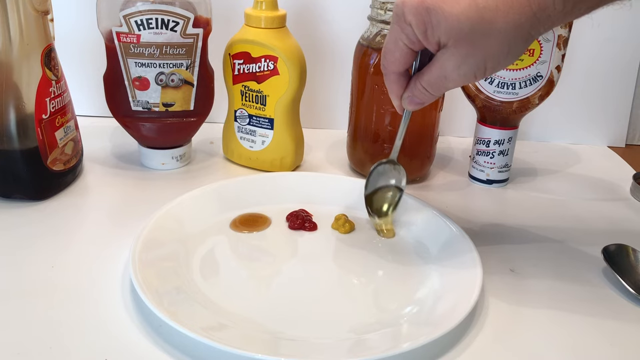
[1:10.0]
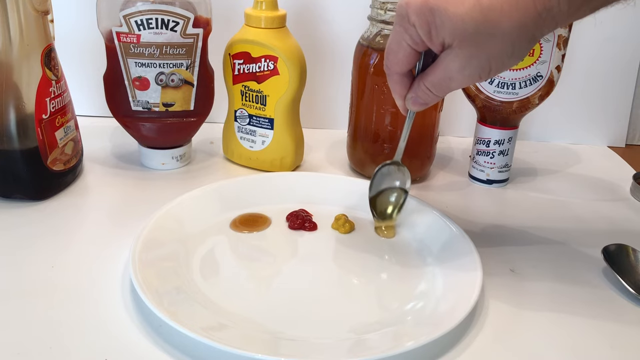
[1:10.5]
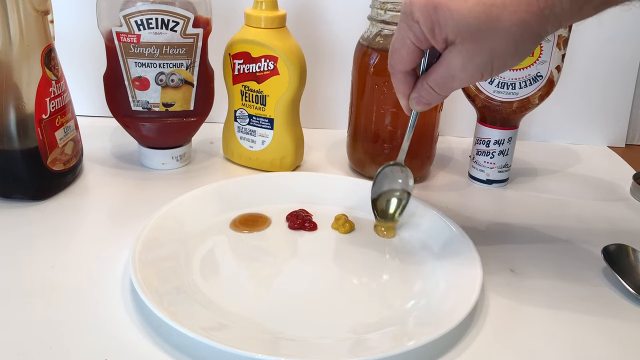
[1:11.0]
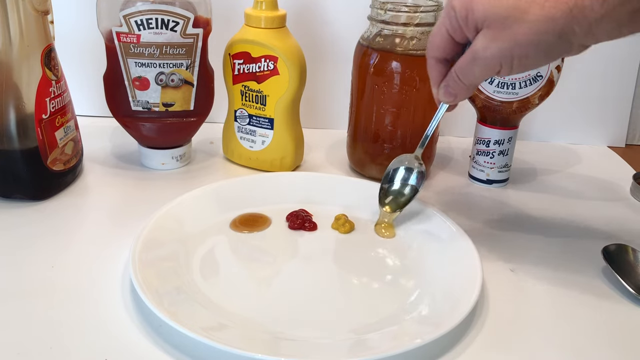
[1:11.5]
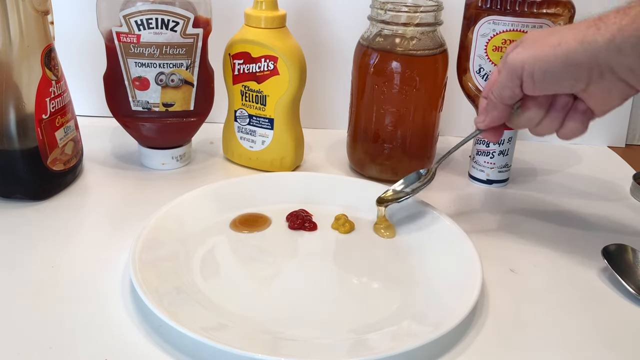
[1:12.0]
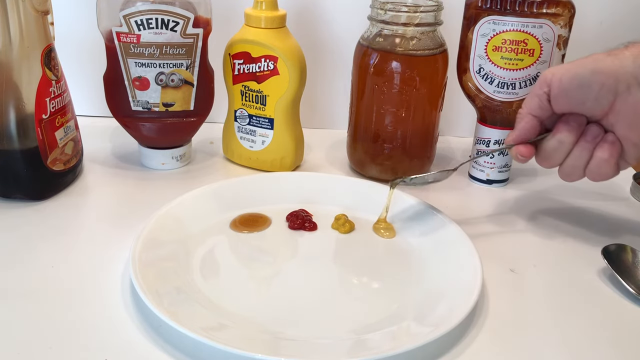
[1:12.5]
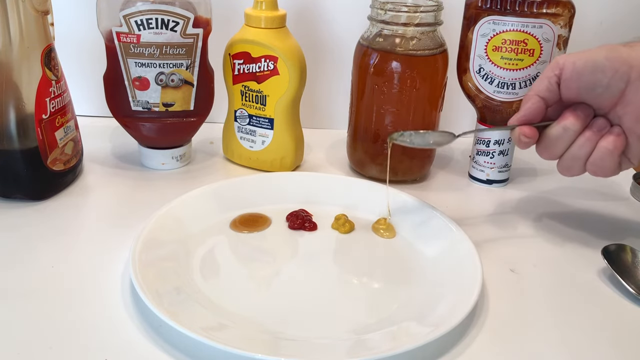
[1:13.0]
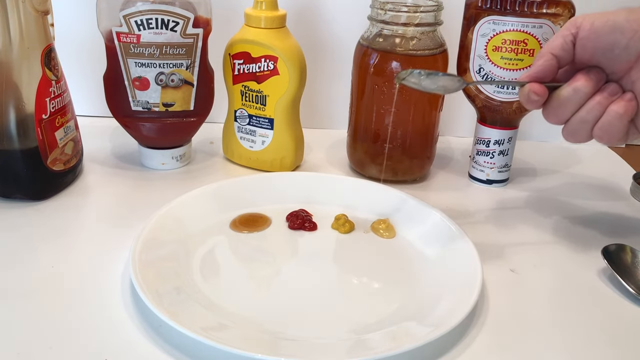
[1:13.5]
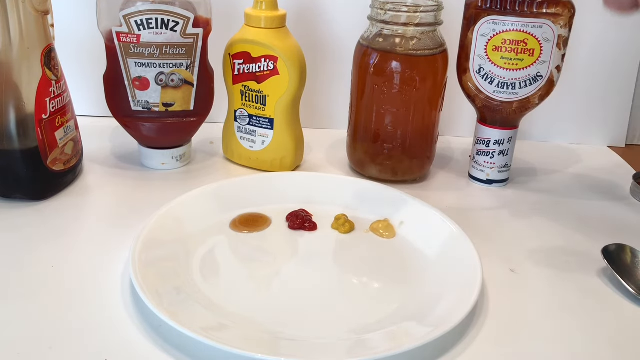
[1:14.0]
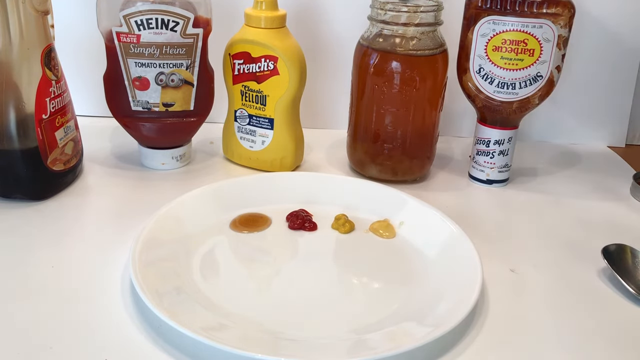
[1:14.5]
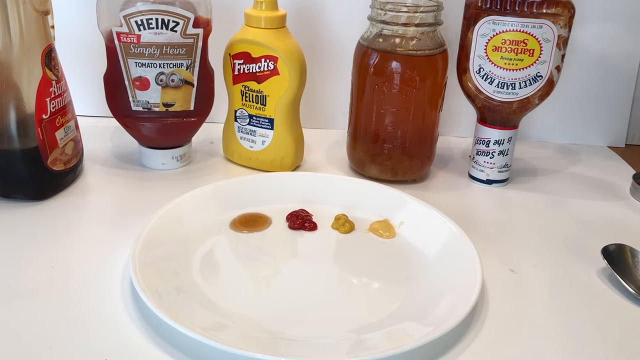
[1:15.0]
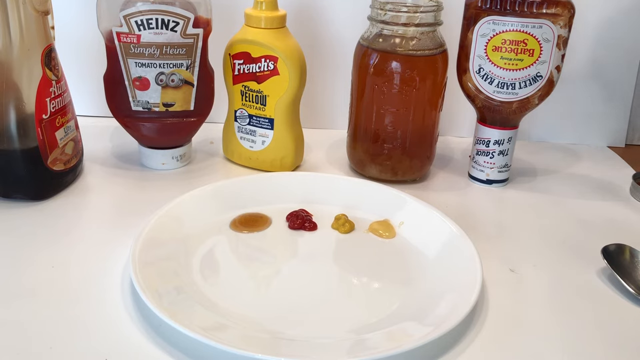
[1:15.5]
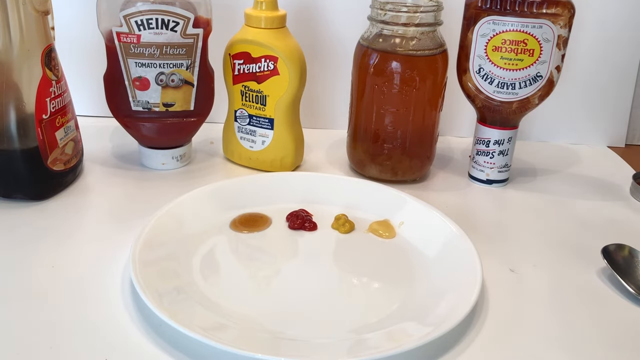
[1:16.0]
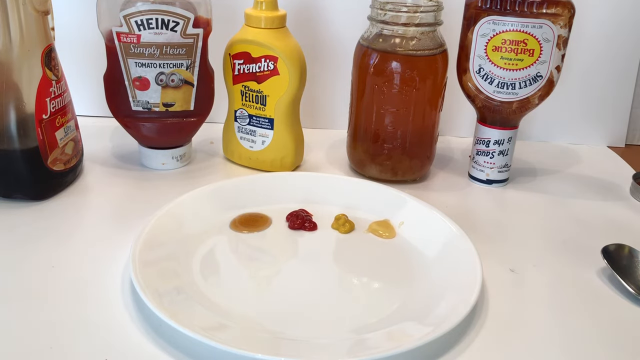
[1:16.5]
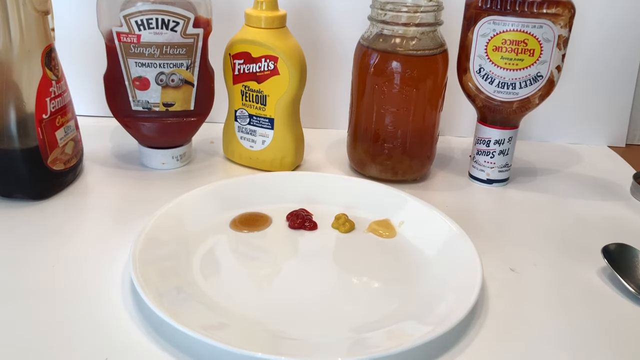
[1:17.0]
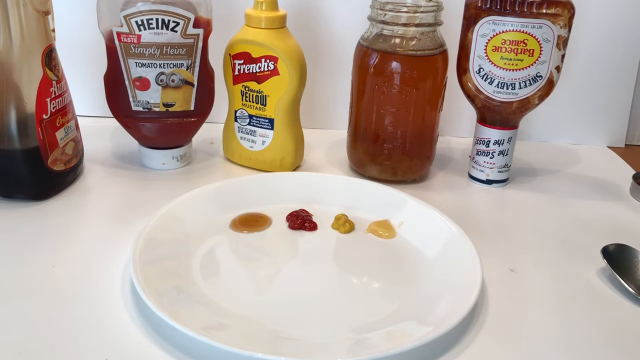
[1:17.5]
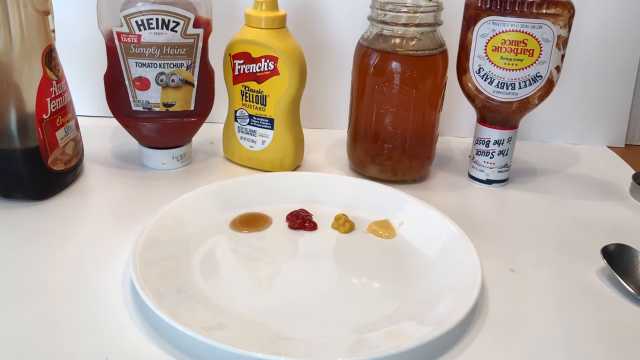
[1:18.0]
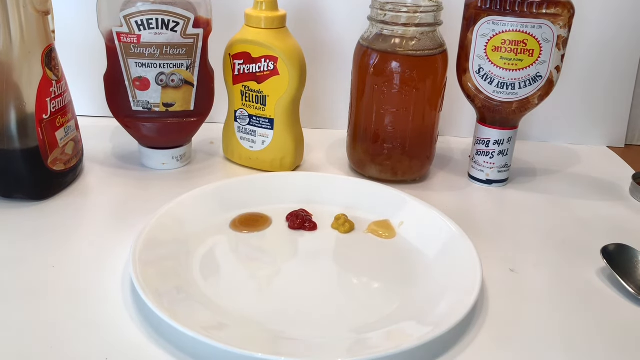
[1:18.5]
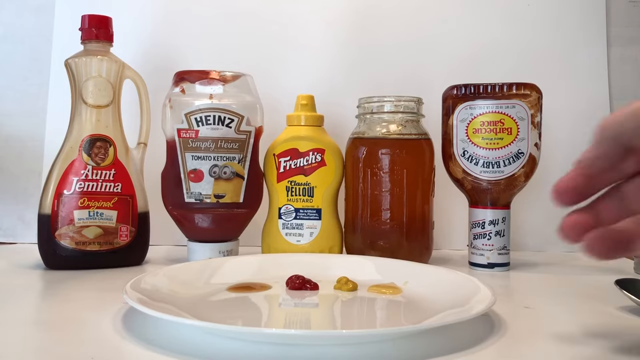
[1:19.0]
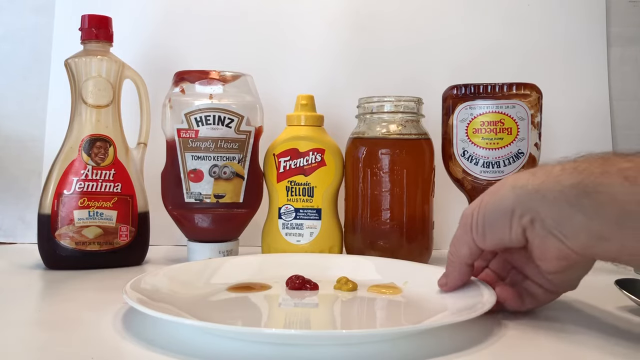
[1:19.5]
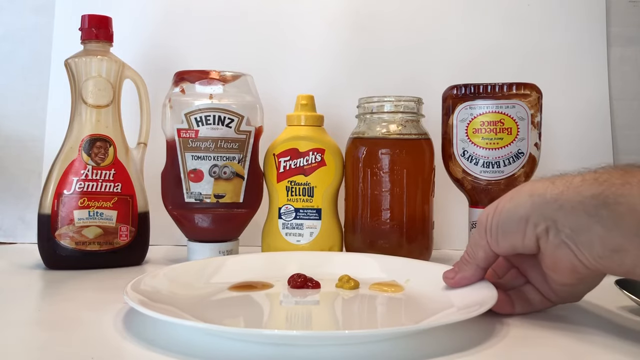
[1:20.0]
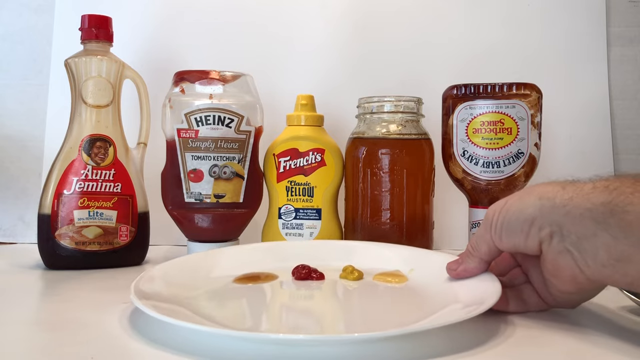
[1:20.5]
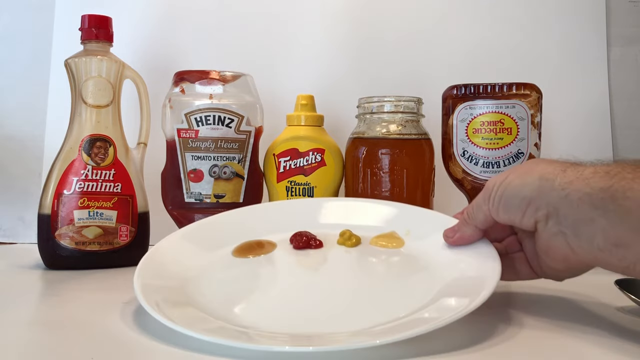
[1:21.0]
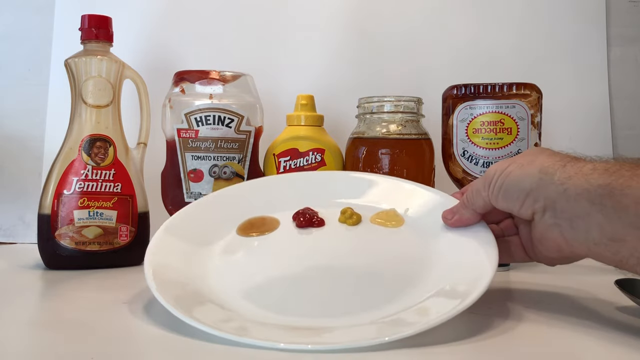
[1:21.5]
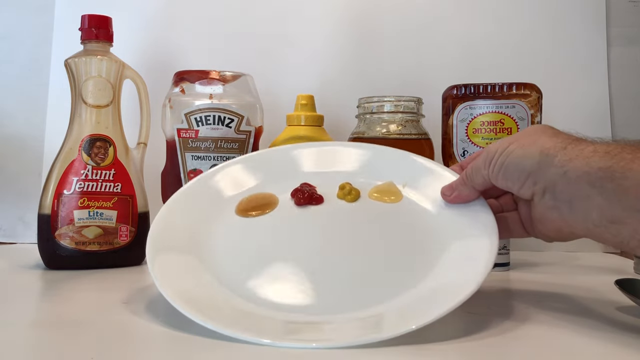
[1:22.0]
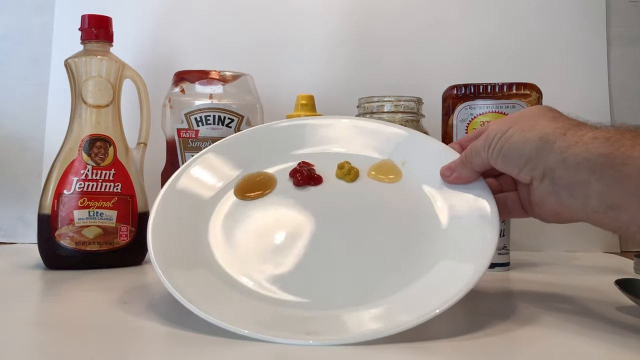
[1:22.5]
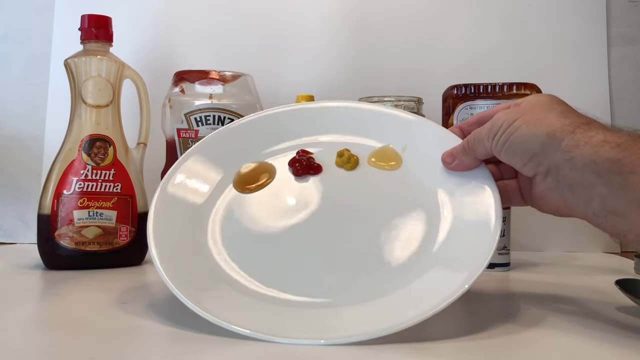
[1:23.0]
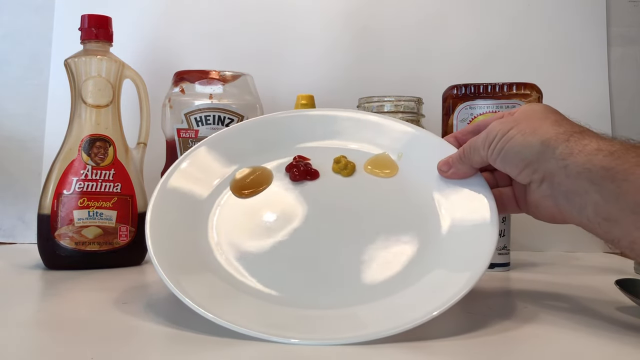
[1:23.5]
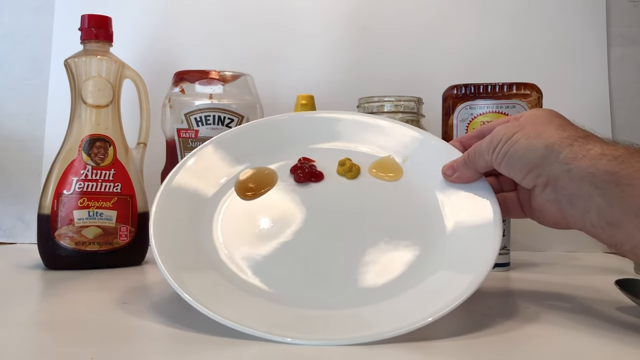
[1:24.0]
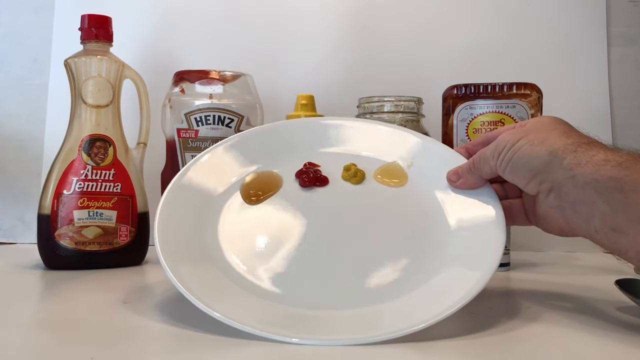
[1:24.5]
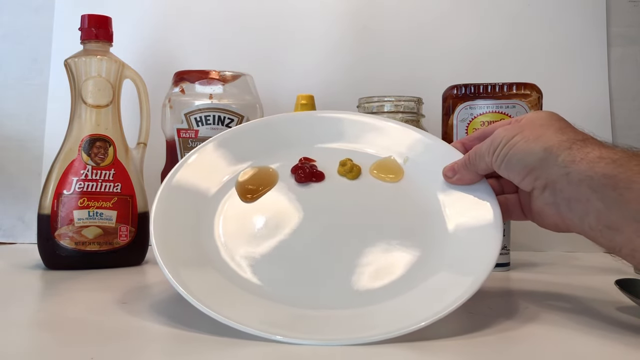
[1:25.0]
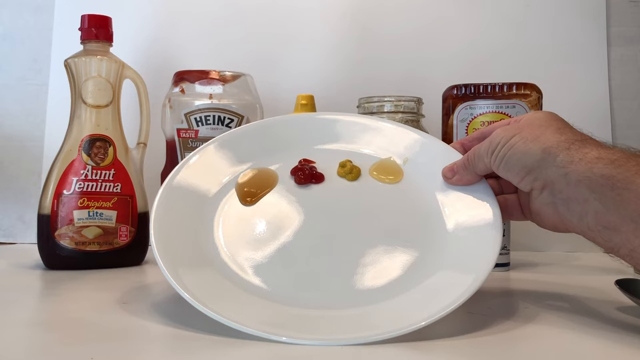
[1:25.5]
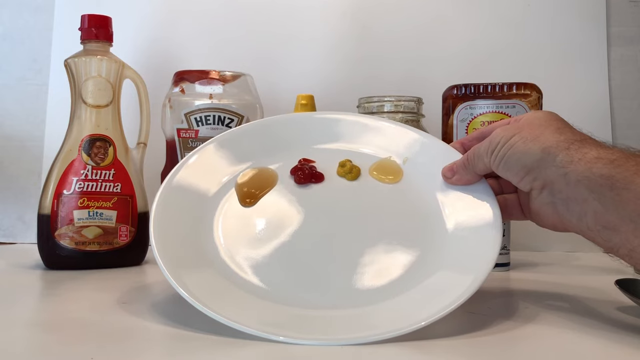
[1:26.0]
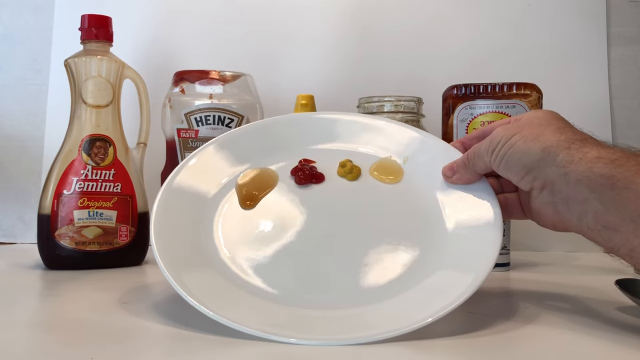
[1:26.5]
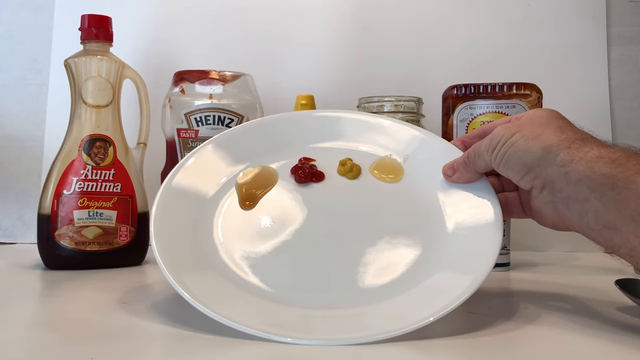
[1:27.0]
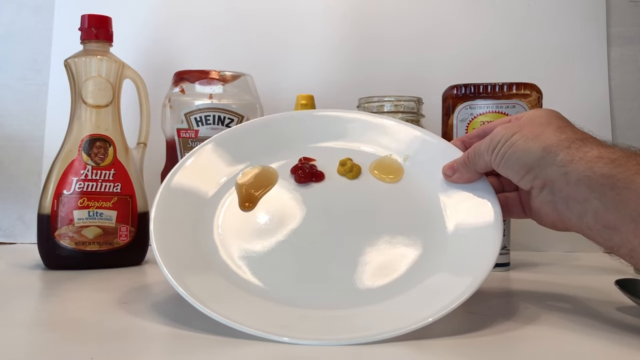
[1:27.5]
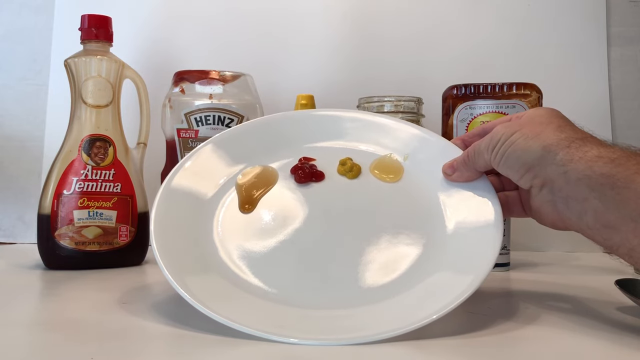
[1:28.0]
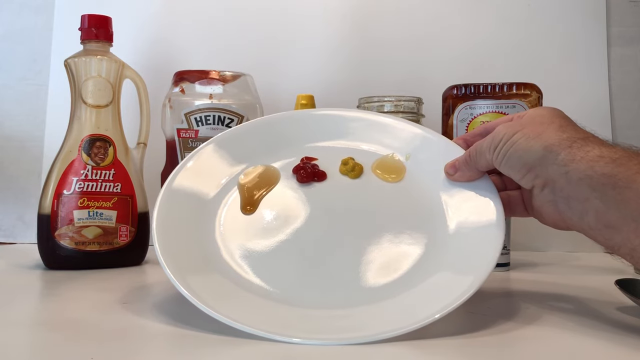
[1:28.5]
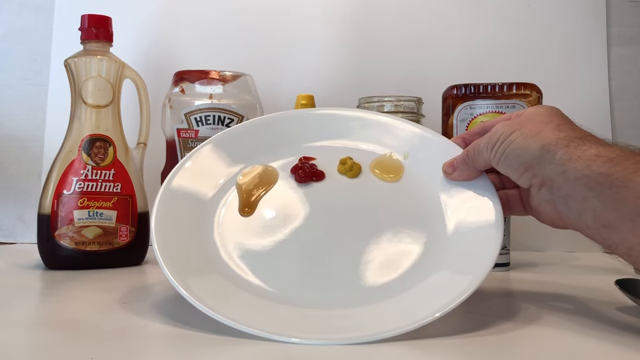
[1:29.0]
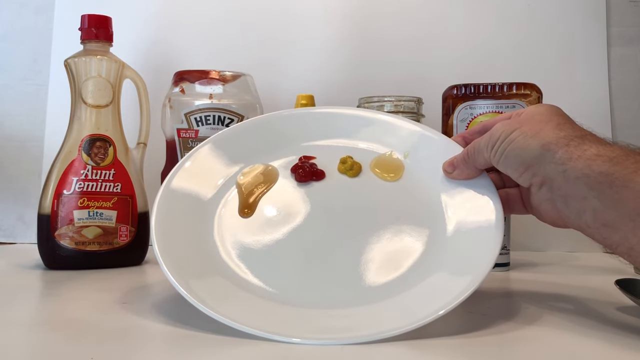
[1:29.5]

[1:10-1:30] The white plate holds honey, ketchup, and mustard, and the man is trying to get a little honey off the spoon onto the plate. Behind the plate, from left to right, are Aunt Jemima's syrup, Heinz ketchup, French's yellow mustard, honey in a mason jar that looks like it could be homemade, and Sweet Baby Ray's barbecue sauce, which is placed on its side. The sticky honey gives him trouble, and he keeps wiggling the spoon. He then picks up the plate with his right hand, which is at the top corner of the plate. As he holds the plate up, the condiments start to drip, and he shakes the plate a little to get them moving.